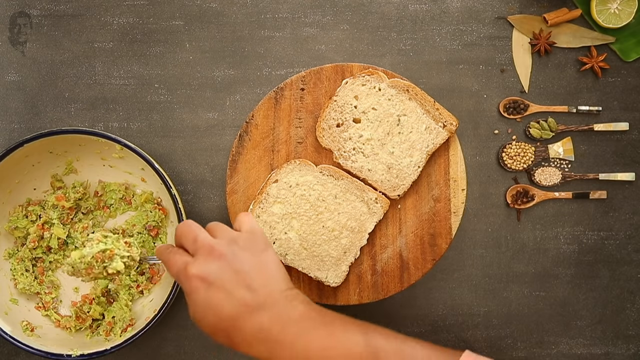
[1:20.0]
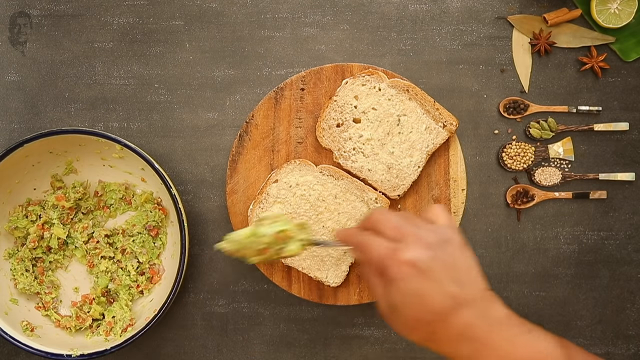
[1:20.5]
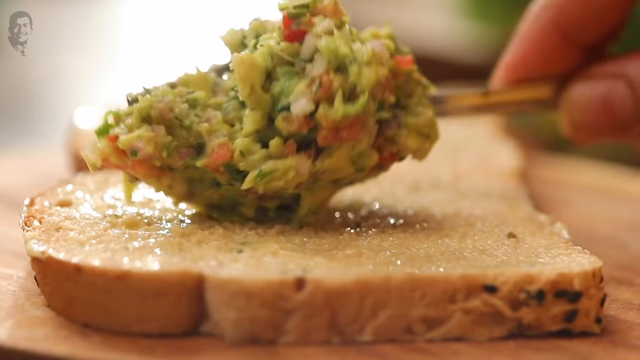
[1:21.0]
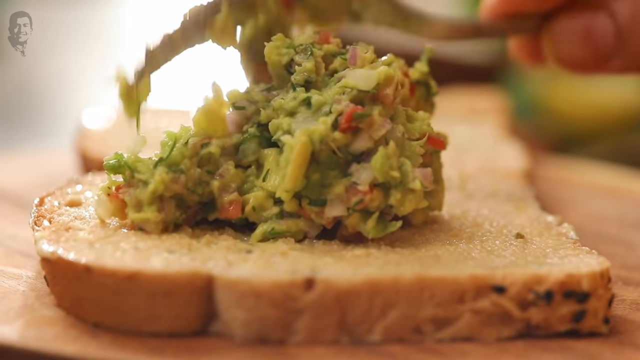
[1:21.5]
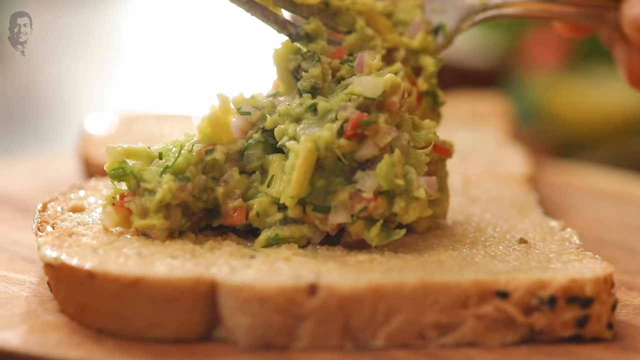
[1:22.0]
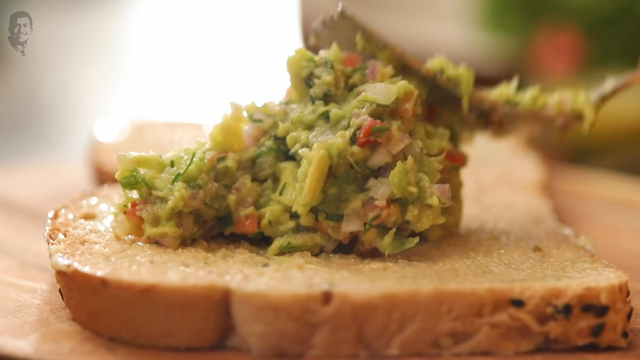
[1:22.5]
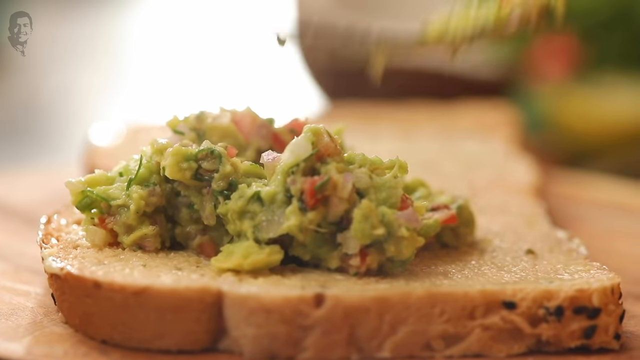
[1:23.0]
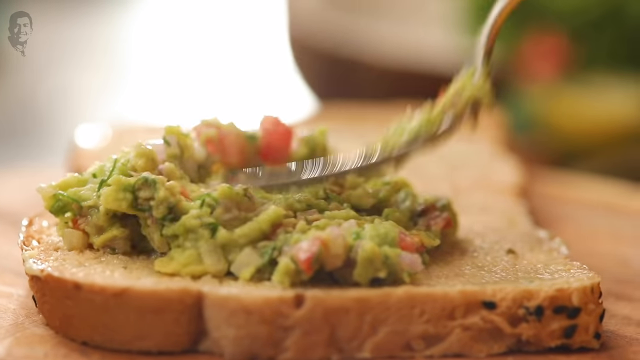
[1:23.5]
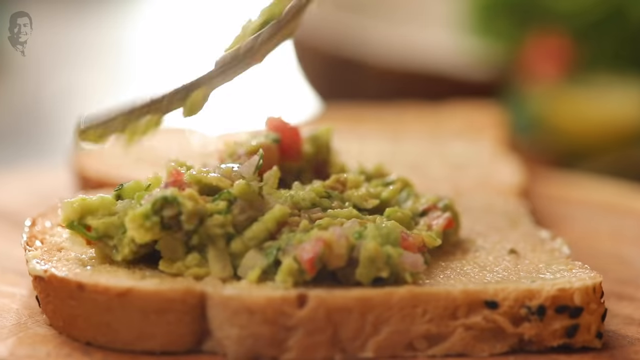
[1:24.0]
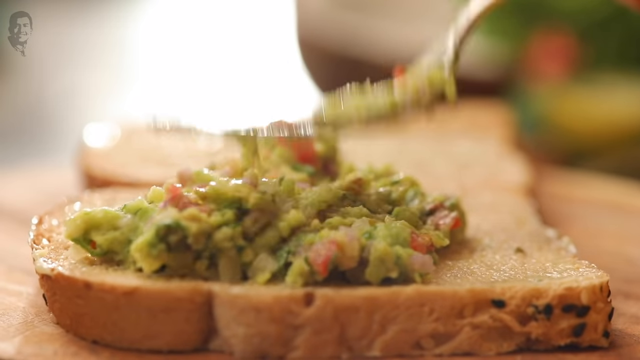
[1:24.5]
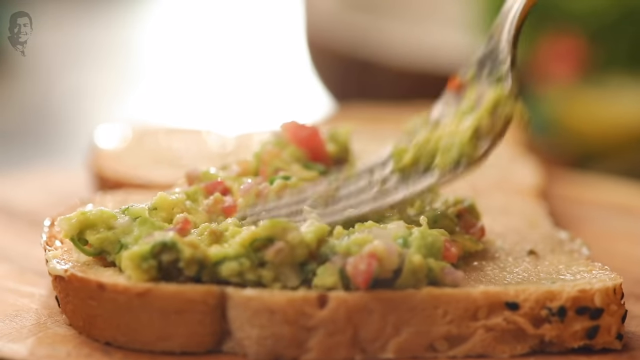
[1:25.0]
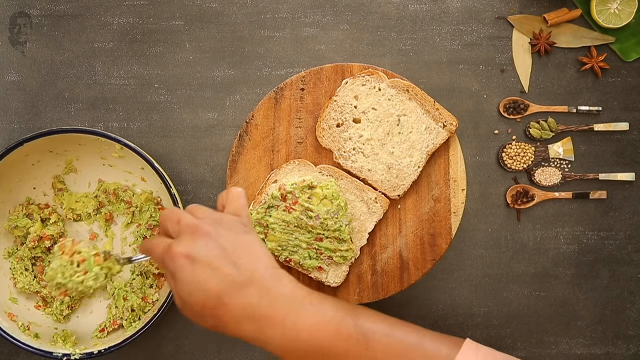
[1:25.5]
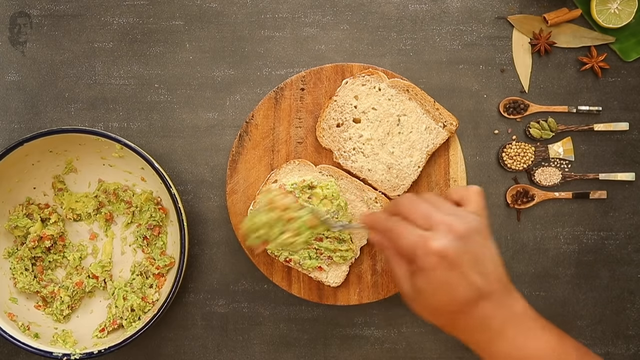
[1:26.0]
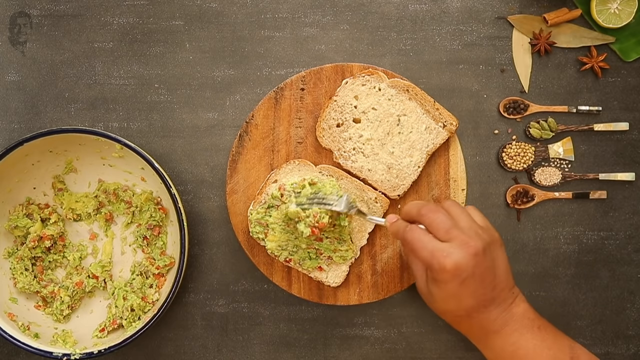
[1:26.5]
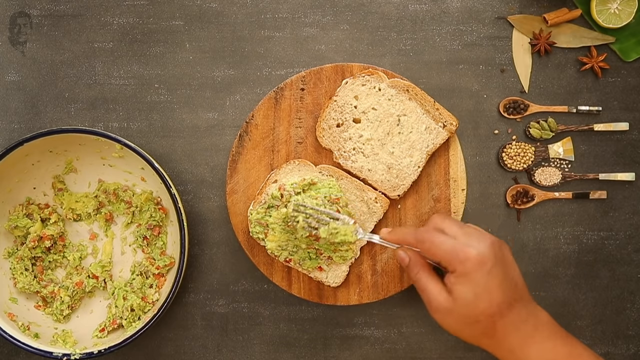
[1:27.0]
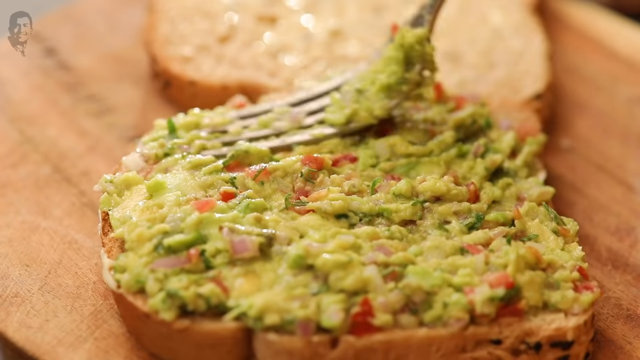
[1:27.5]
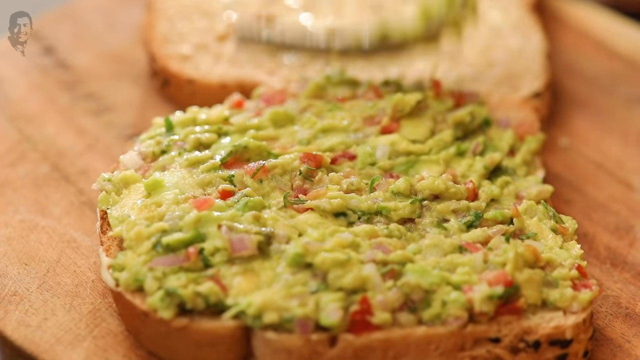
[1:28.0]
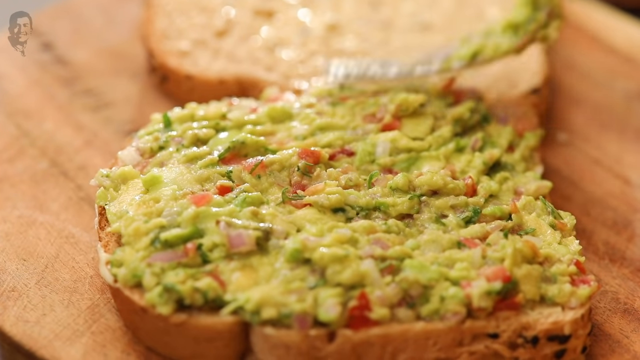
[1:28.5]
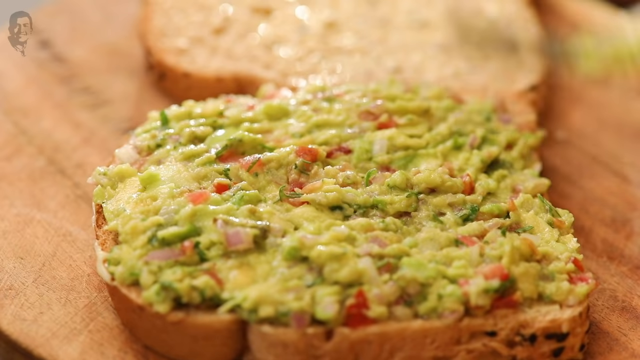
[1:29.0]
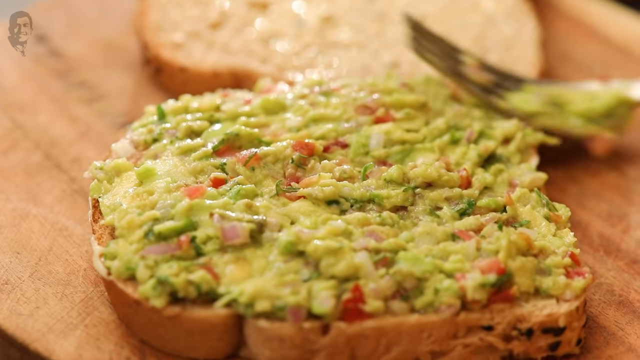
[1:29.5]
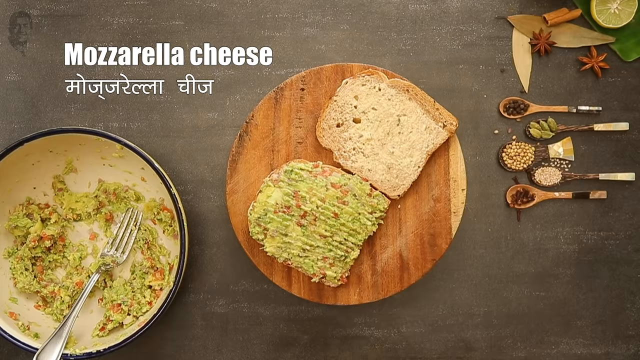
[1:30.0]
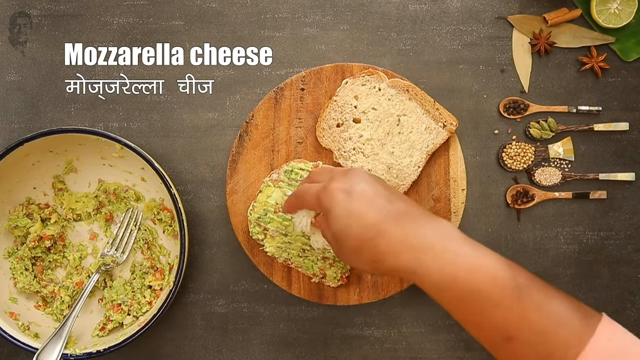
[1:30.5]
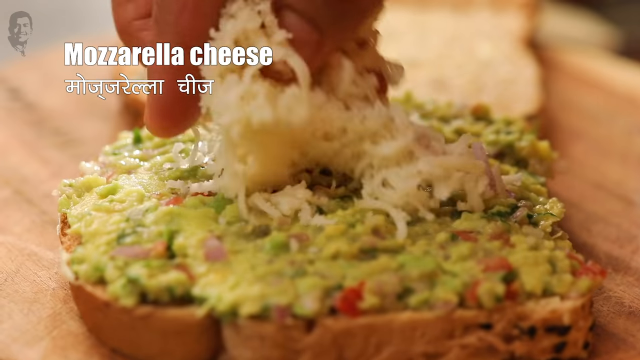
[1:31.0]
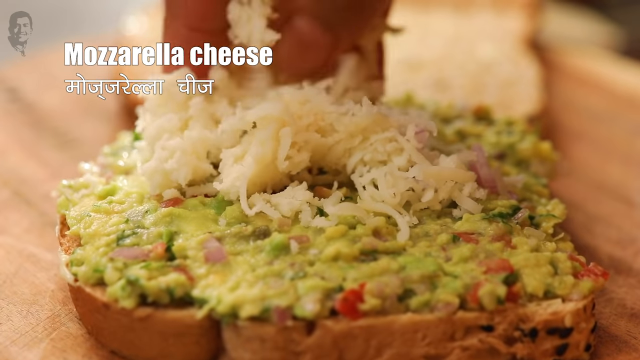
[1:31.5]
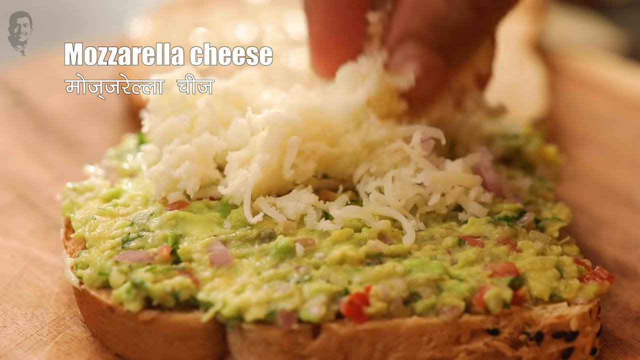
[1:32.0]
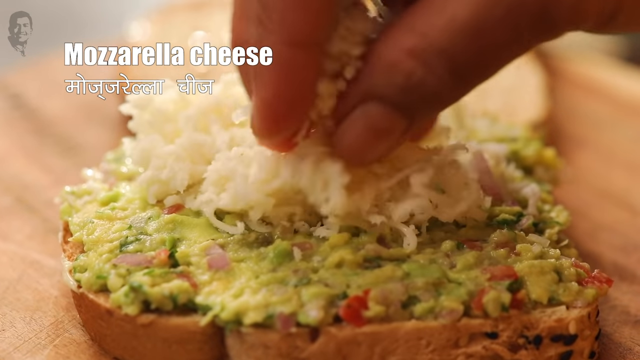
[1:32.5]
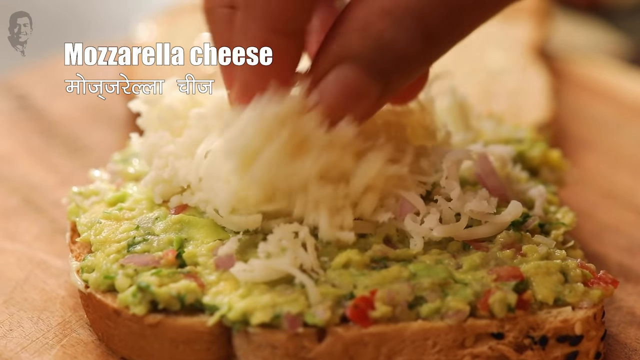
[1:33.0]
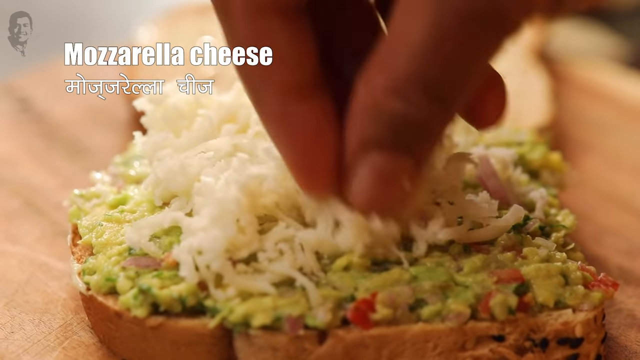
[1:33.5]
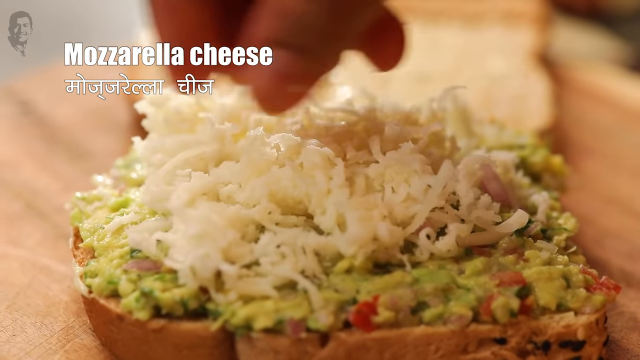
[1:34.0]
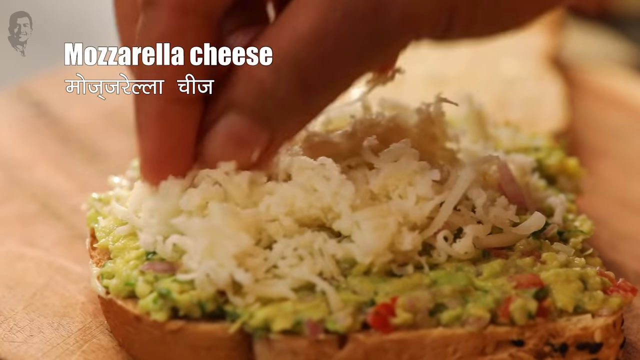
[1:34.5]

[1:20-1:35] The multigrain bread is on the round wood cutting board with herb butter spread on it. The woman uses a fork to take avocado mix out of the bowl and spreads it evenly on the bread in a layer, maybe half an inch thick, covering the entire slice. On top of the avocado layer she puts cheese that looks like a white grated cheese, a processed mozzarella, and presses it down.